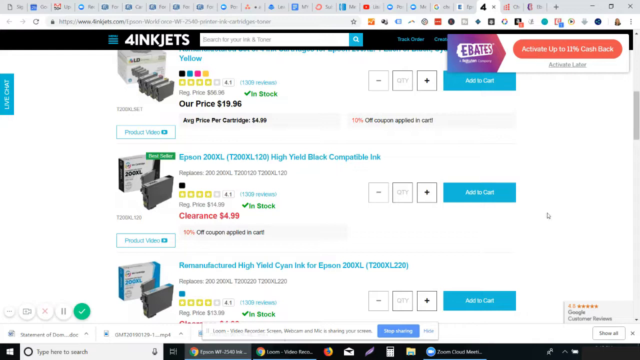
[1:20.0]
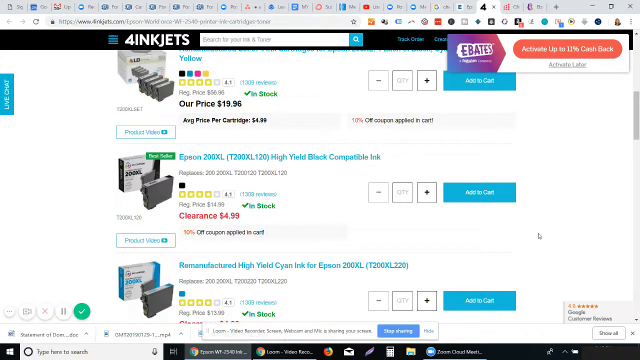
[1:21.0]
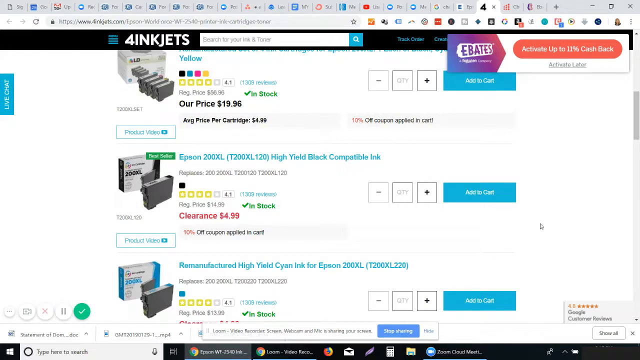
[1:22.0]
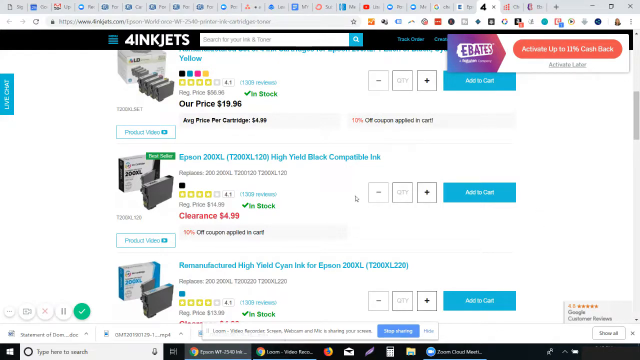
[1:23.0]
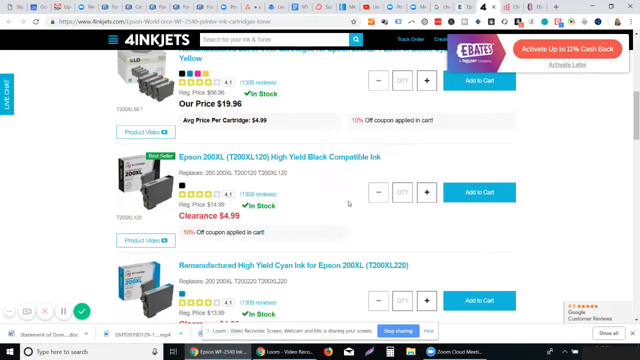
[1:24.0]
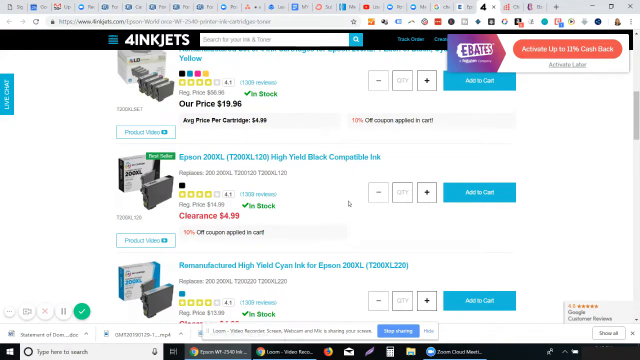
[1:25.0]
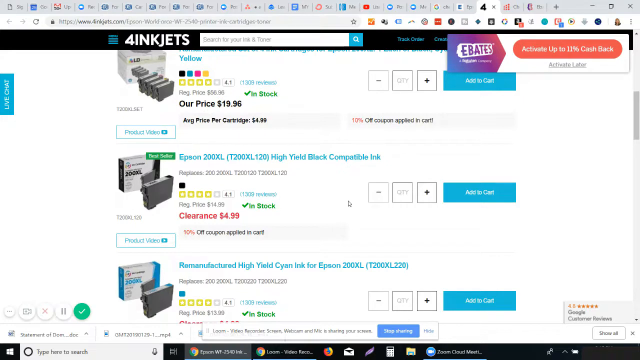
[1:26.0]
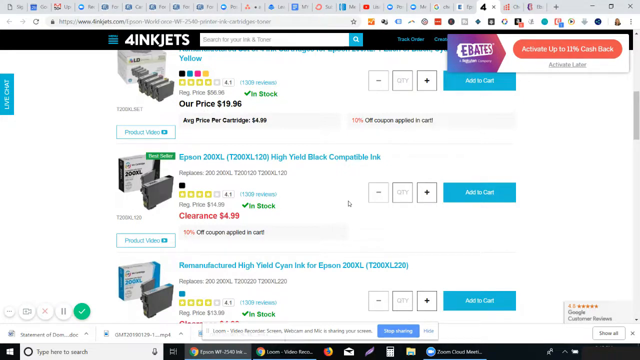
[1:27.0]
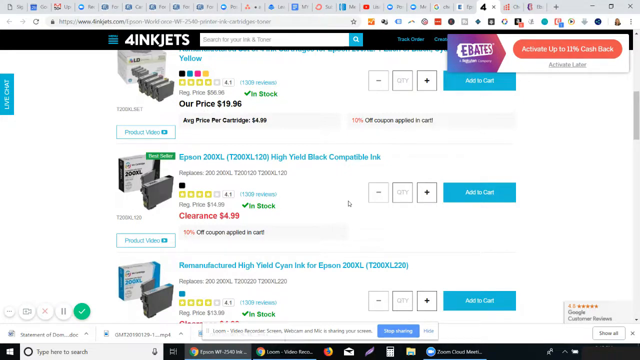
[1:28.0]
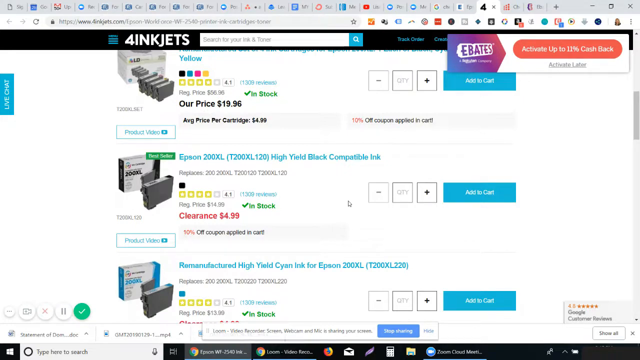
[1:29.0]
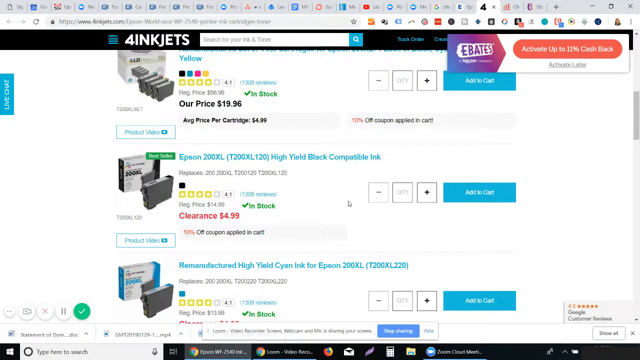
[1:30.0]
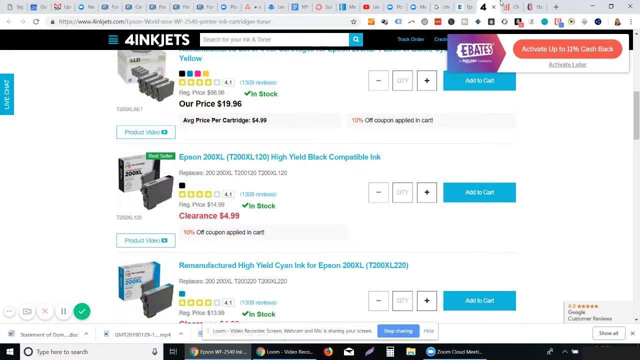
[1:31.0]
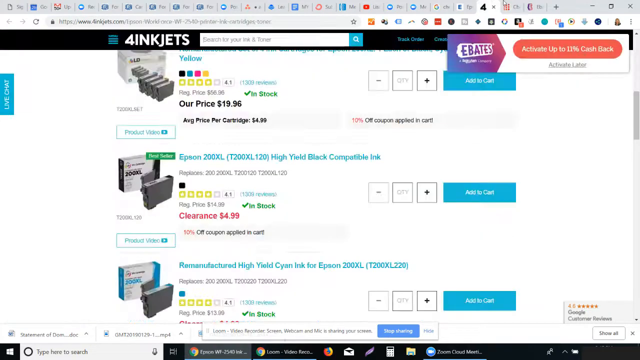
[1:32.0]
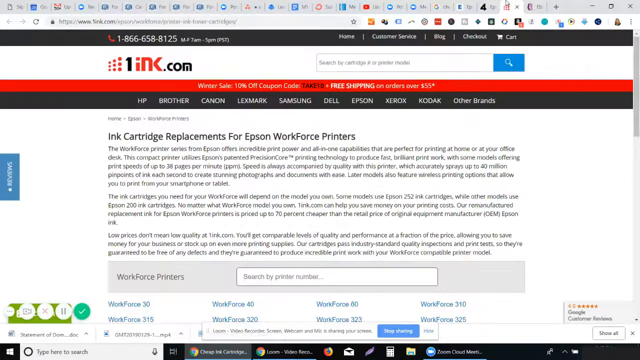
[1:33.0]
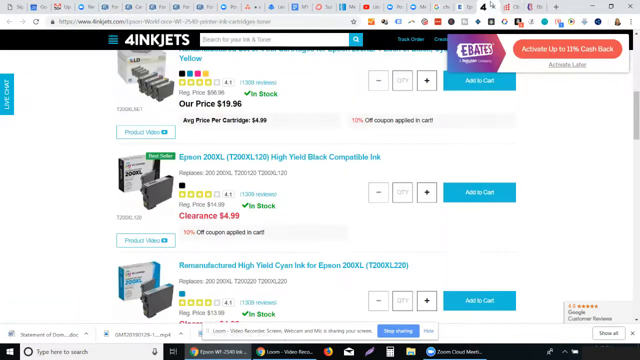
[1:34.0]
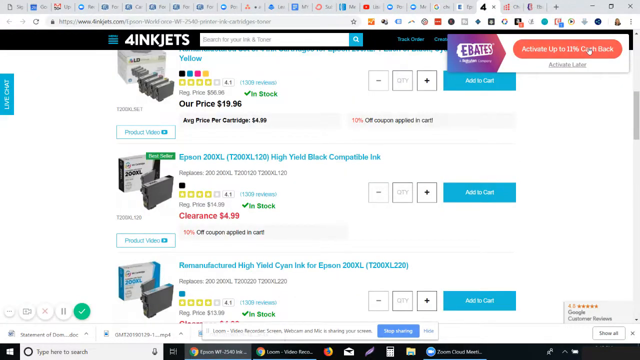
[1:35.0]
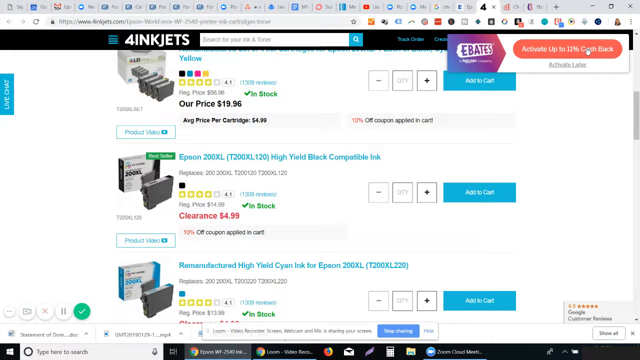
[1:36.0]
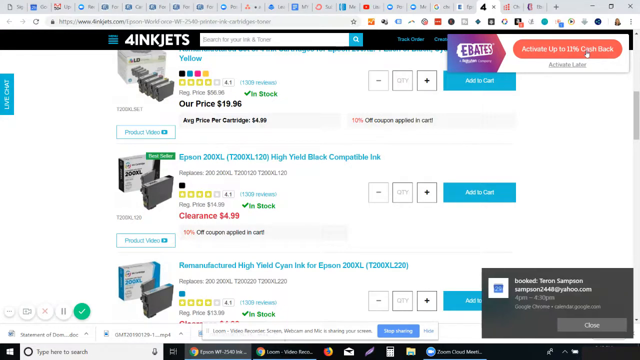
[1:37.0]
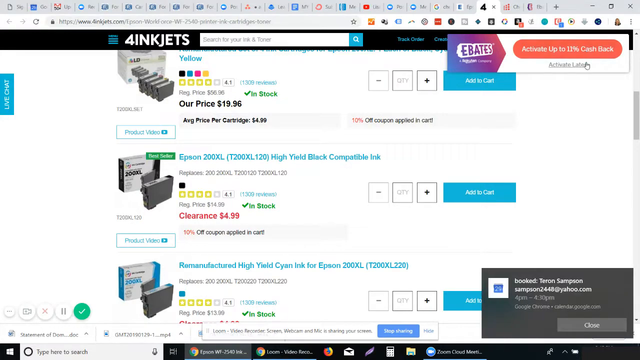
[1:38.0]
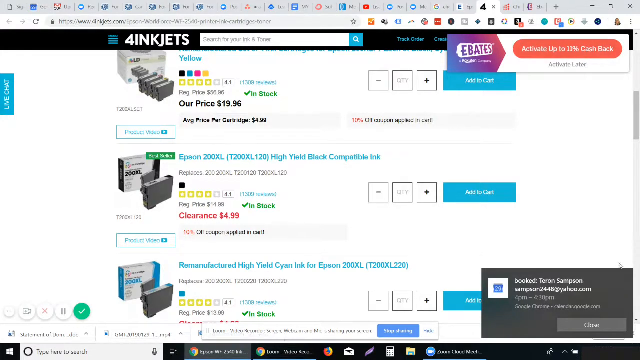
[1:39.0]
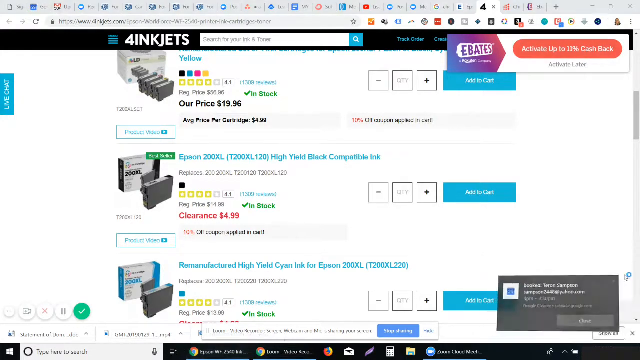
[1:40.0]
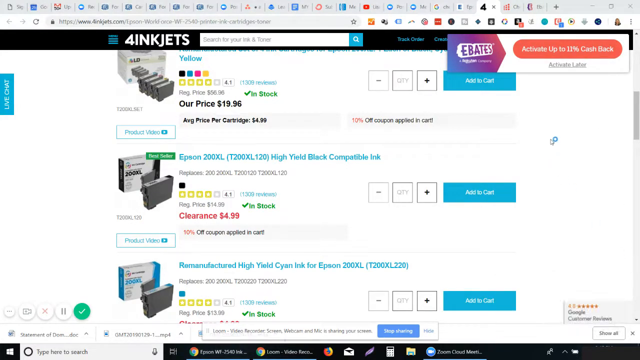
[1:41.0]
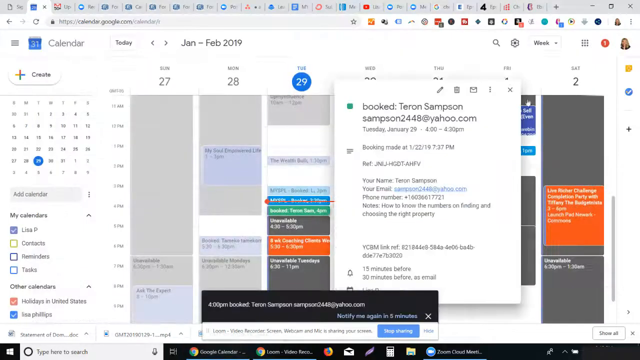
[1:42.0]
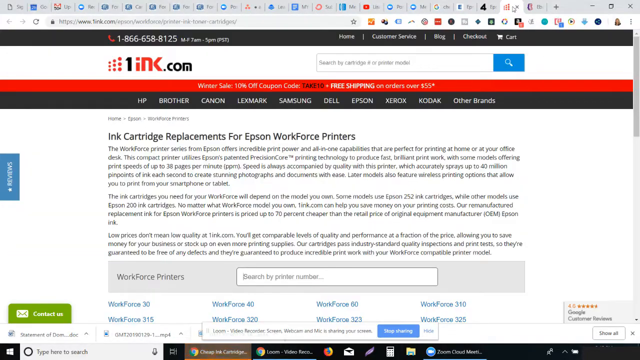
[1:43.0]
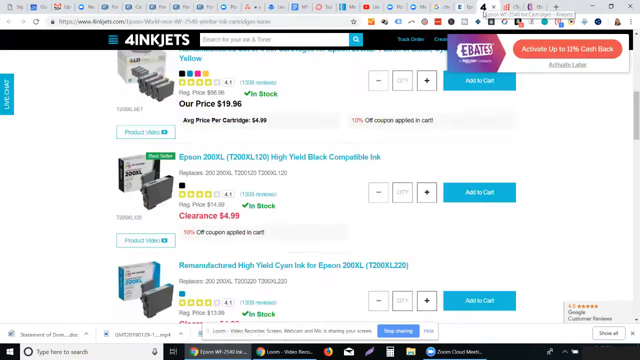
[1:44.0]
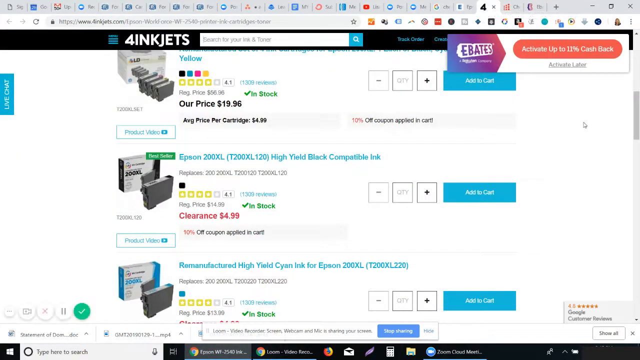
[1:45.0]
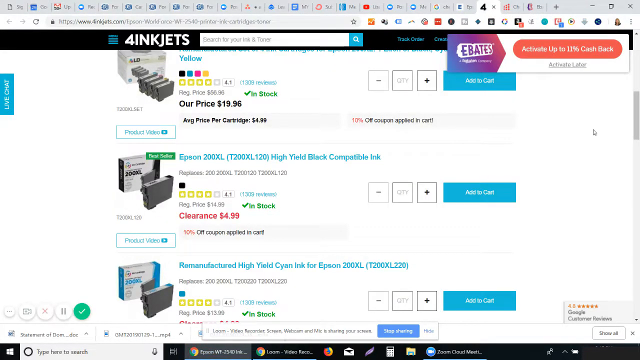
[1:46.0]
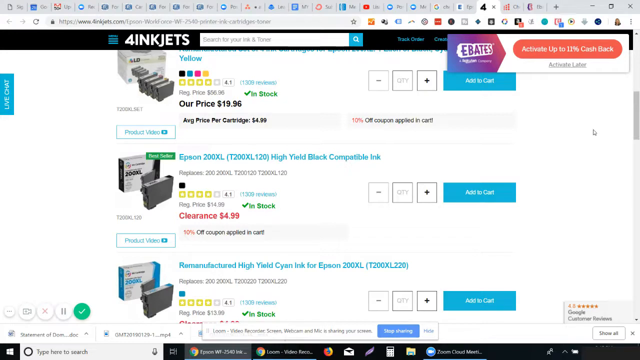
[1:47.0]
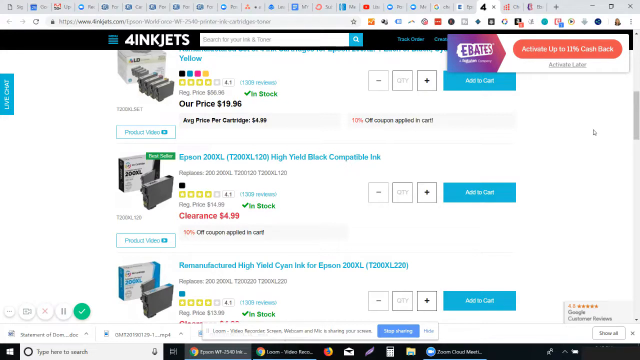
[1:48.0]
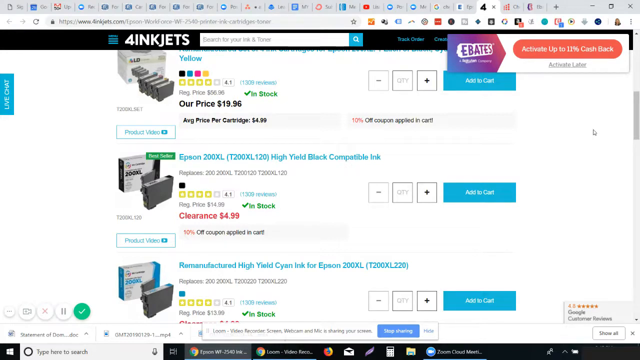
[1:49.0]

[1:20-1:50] The person goes back to the four inkjets website. A pop-up for Ebates appears on the right-hand side reading "activate up to 11% cash back," with a link underneath reading "activate later." On the four inkjets site, the add-to-cart buttons are rectangles a little darker than aquamarine, each with "add to cart" in white. One ink is on clearance for $4.99. The person clicks over to one ink, back to four inkjets, off one ink, and back to four inkjets again, and a pop-up appears in a corner. The person keeps going back and forth between the sites.